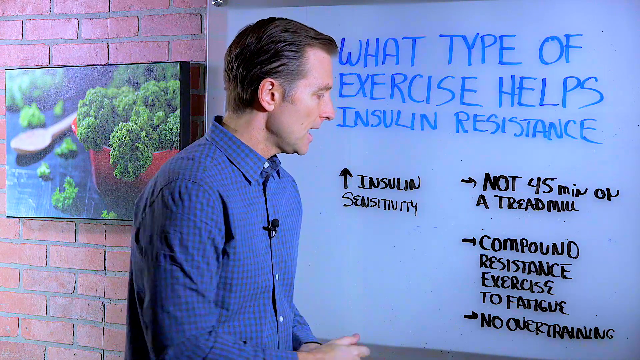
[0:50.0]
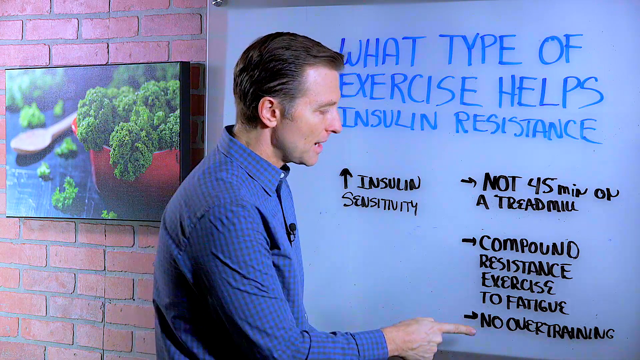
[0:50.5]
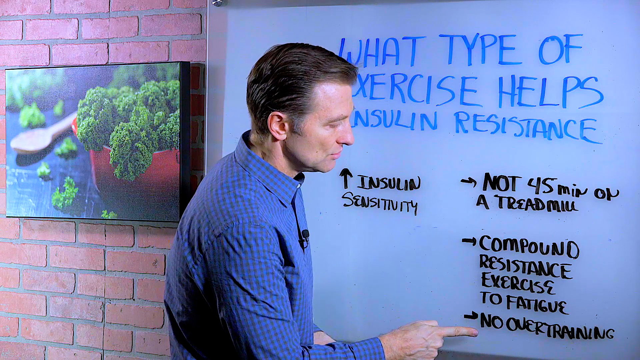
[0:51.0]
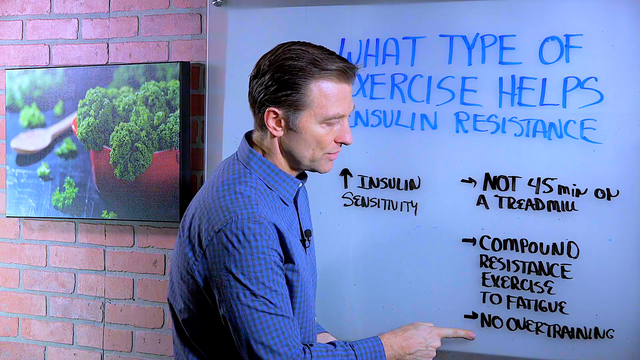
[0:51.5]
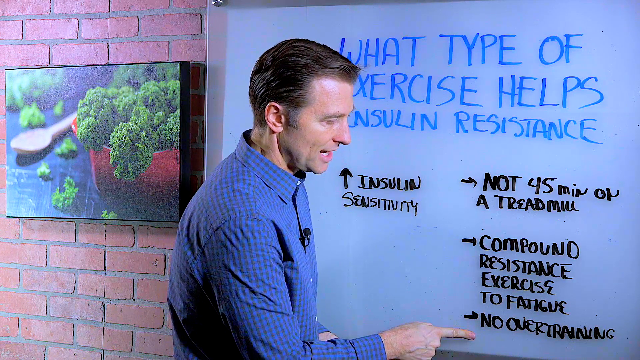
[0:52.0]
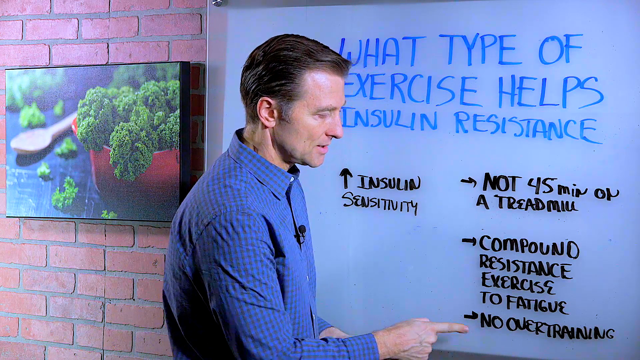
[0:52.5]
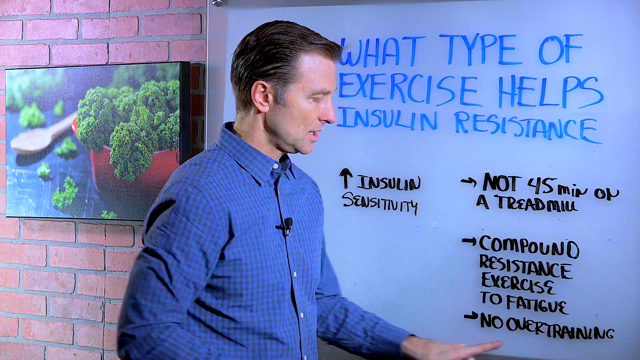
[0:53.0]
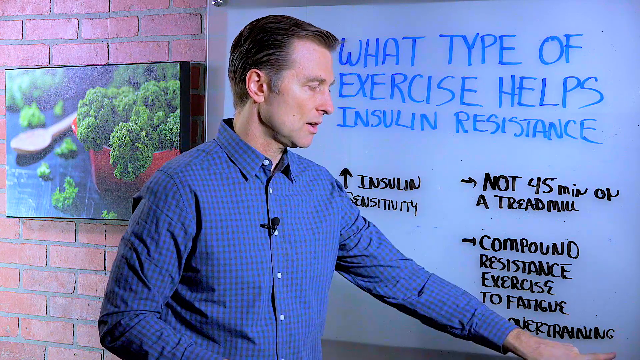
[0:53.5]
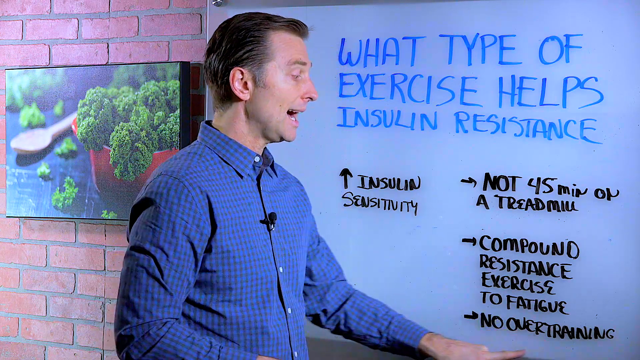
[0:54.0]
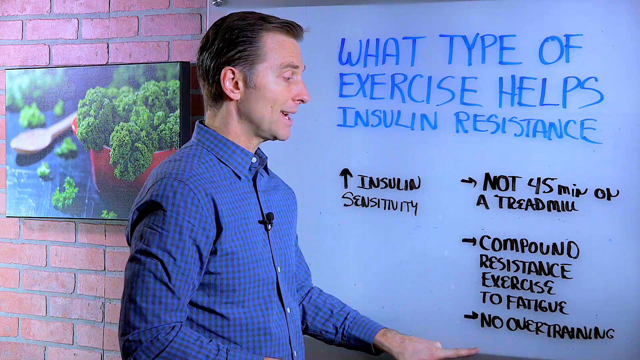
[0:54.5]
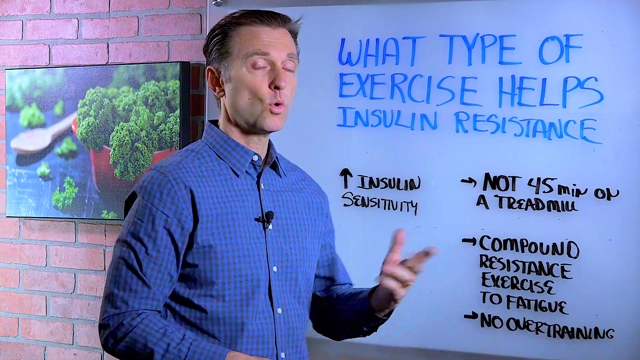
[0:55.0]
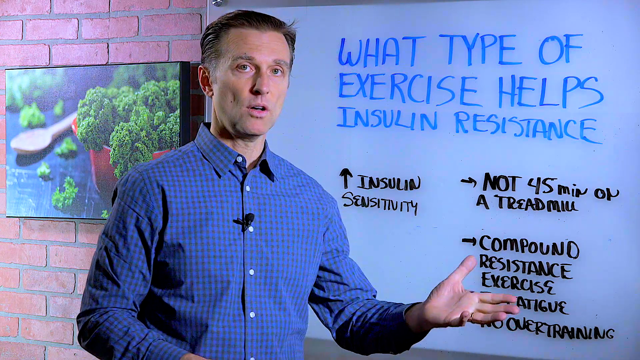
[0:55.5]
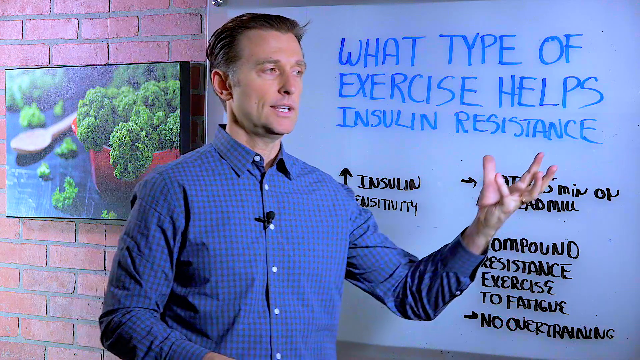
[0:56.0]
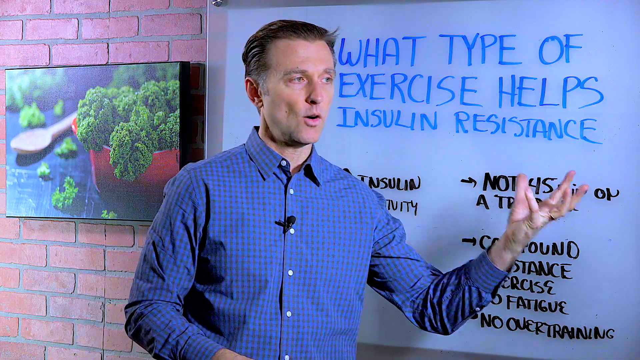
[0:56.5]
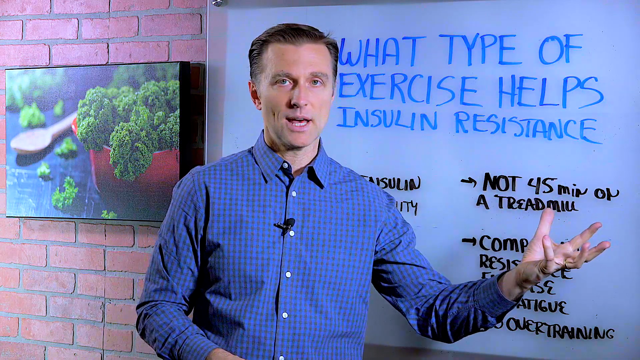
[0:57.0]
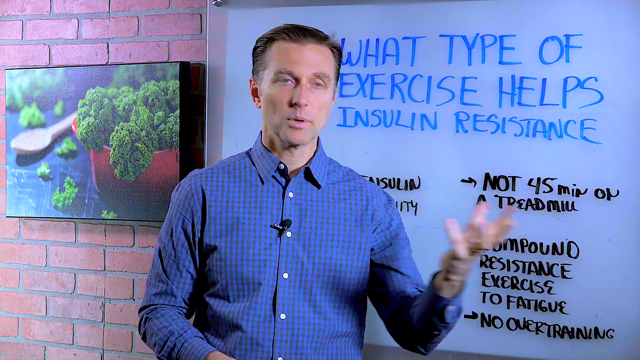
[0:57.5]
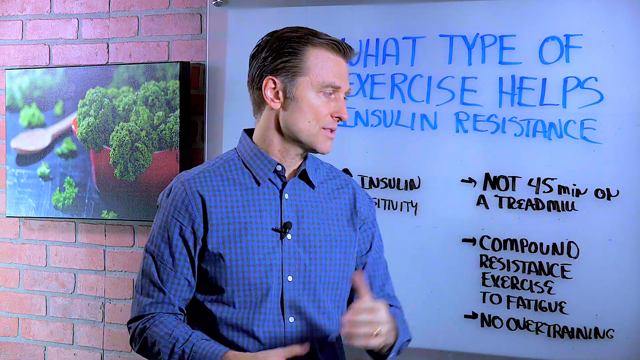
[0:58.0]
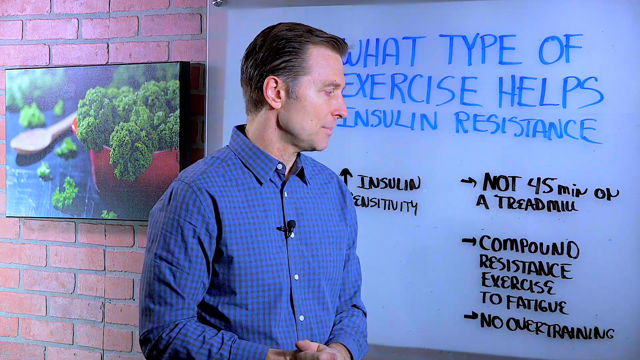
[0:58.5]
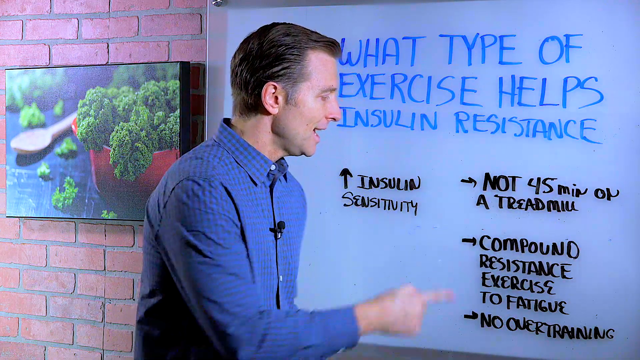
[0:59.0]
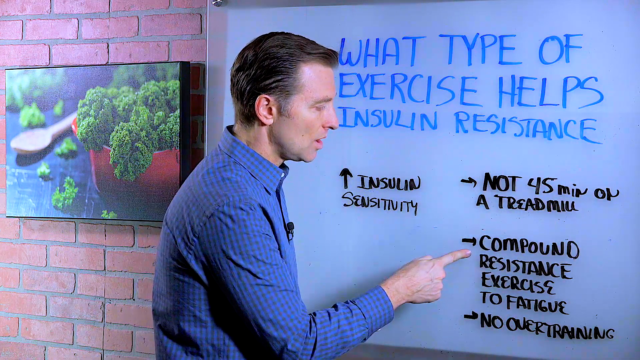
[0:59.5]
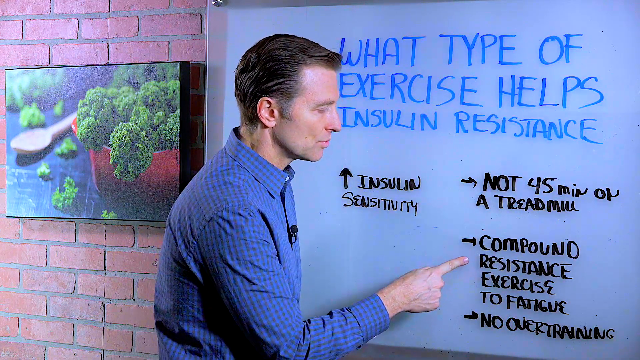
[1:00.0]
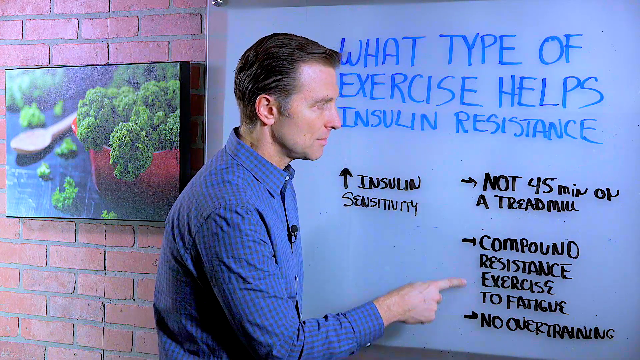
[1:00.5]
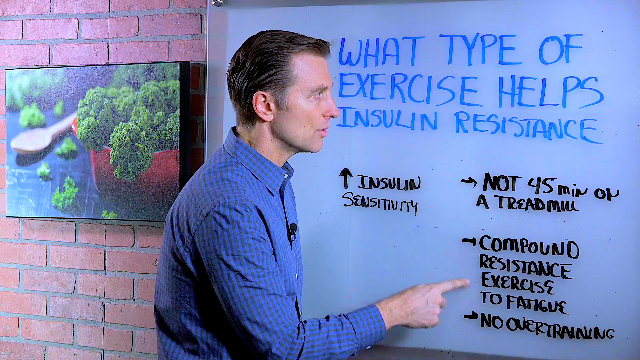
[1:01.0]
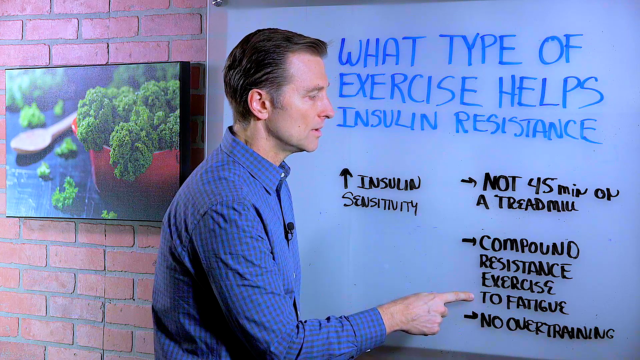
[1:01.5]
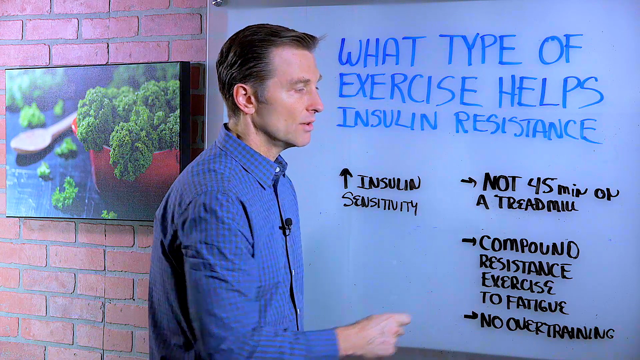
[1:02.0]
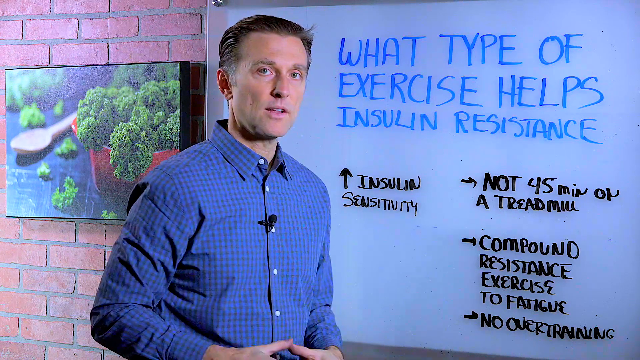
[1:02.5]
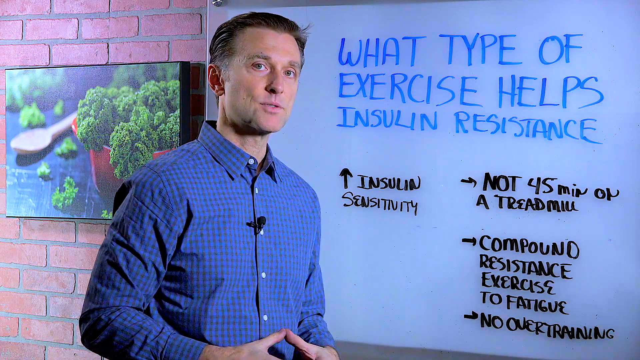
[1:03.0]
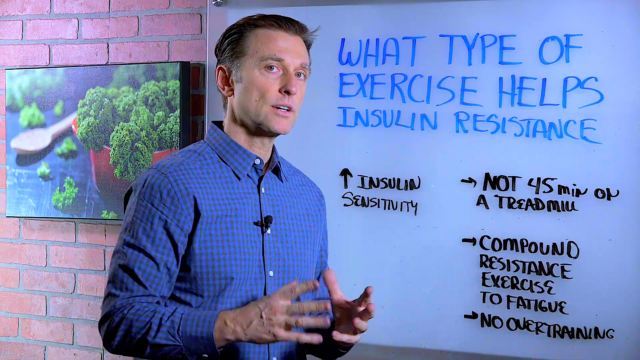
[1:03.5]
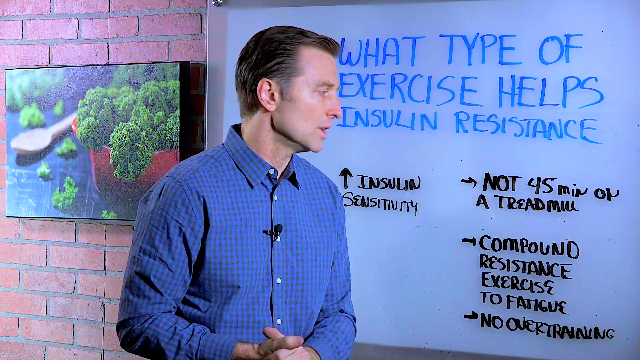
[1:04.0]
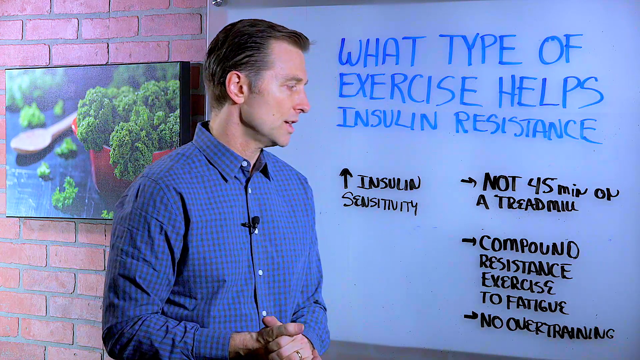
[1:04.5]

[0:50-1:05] The same man, in the blue plaid button-up collared shirt with the microphone attached to his chest, is in front of the whiteboard, which is attached with what looks like four screw-like things to the brick wall behind him. The brick wall is red and appears to have normal-colored cement or mortar between the bricks. To his left is a black-framed picture of a red bowl with lettuce coming out of it, sitting on a black table with a wooden spoon. He moves from "compound resistance exercise to fatigue" to the bottom item on his list, "no overtraining". On the left of the board is an arrow going up with "insulin sensitivity" written beside it.